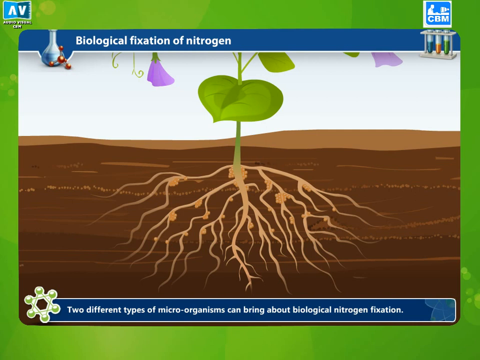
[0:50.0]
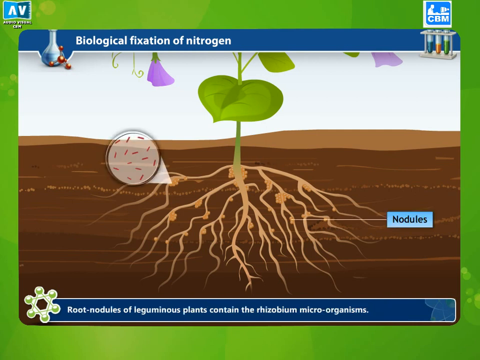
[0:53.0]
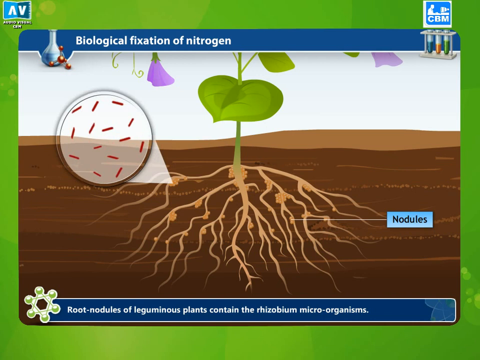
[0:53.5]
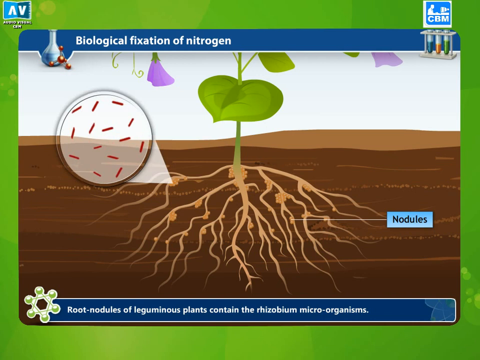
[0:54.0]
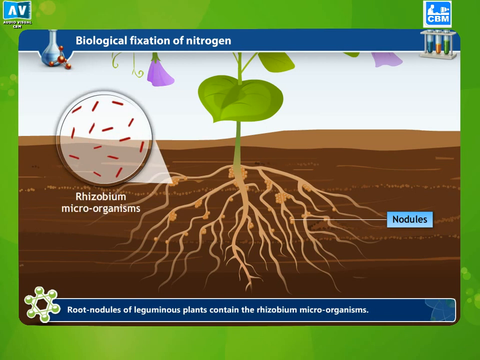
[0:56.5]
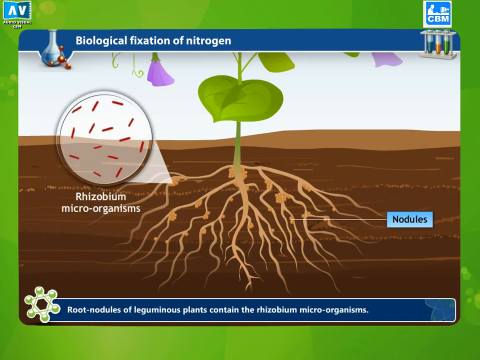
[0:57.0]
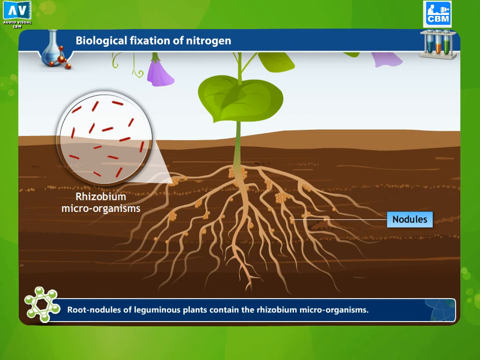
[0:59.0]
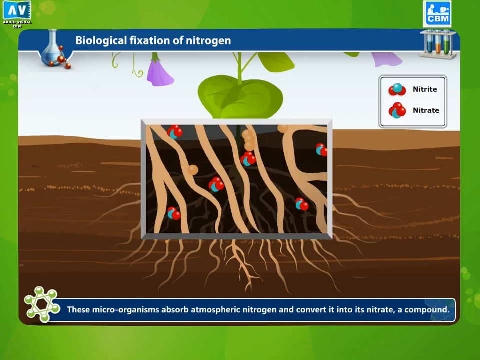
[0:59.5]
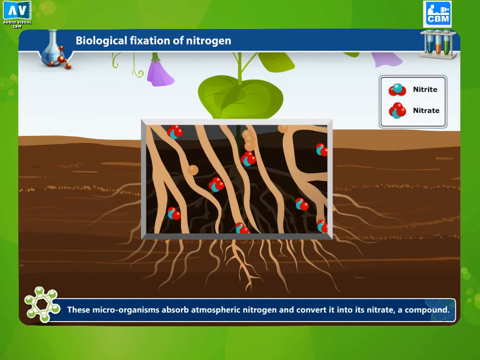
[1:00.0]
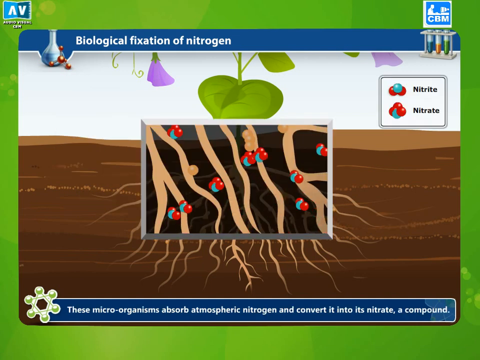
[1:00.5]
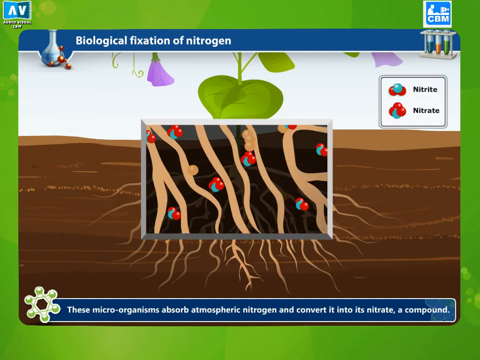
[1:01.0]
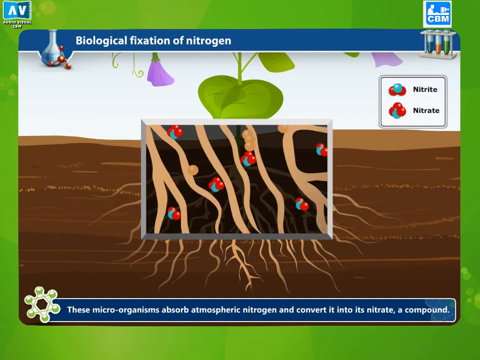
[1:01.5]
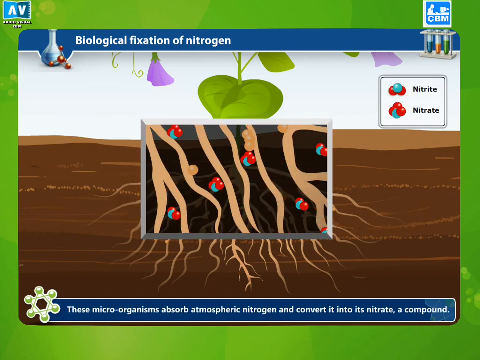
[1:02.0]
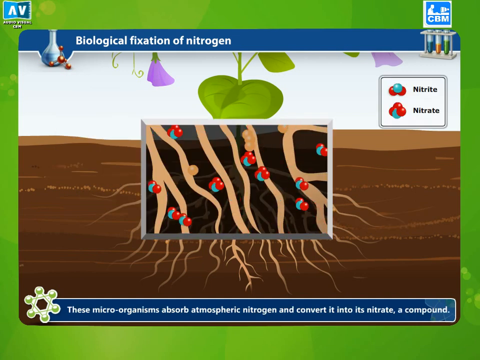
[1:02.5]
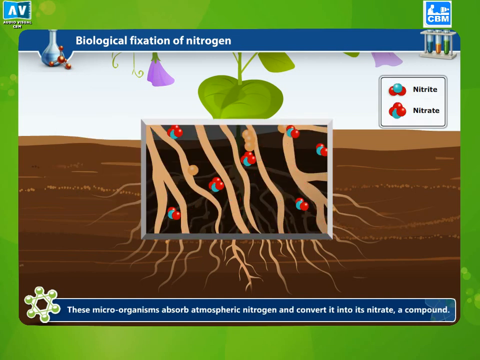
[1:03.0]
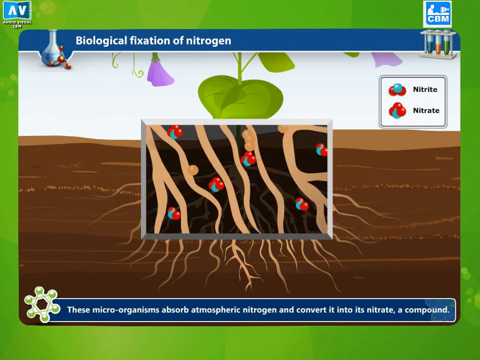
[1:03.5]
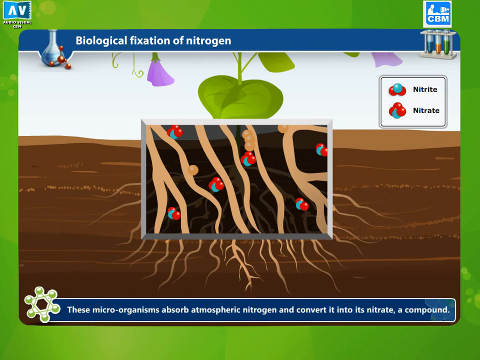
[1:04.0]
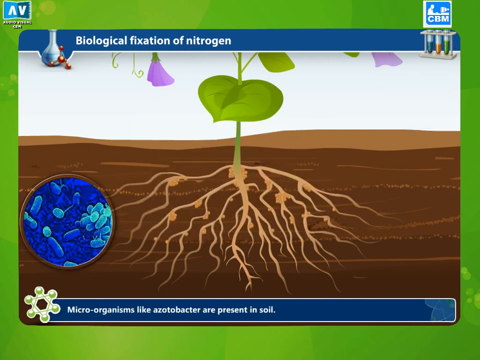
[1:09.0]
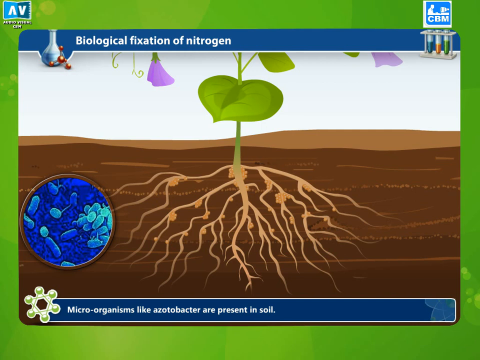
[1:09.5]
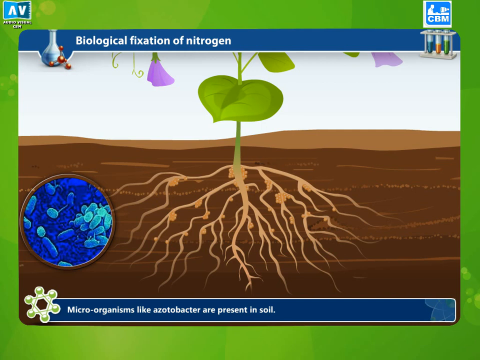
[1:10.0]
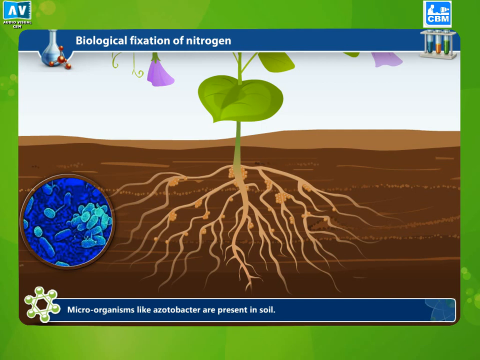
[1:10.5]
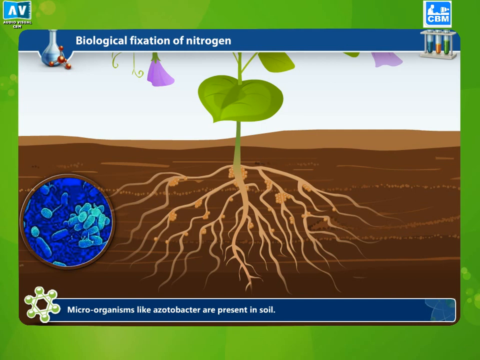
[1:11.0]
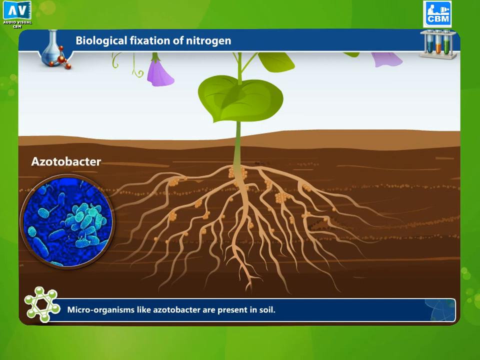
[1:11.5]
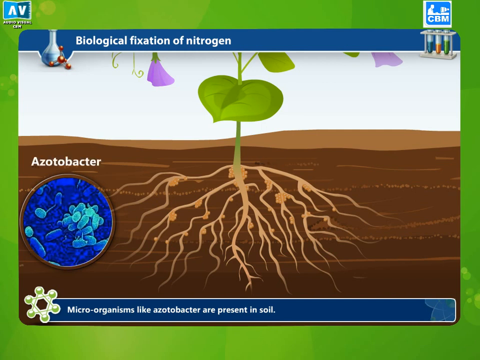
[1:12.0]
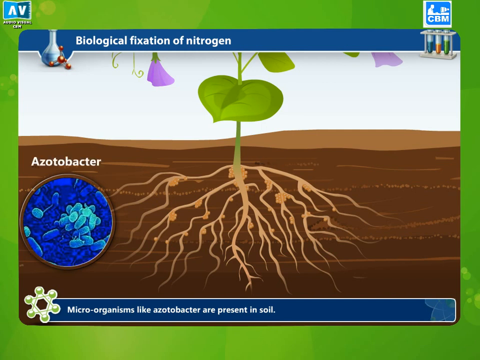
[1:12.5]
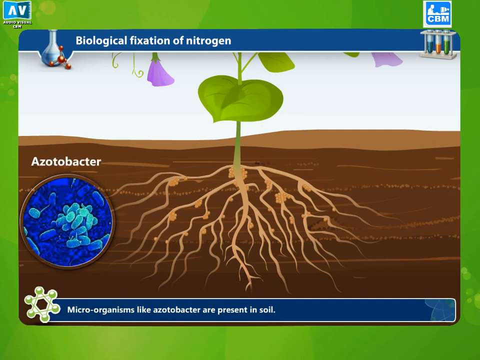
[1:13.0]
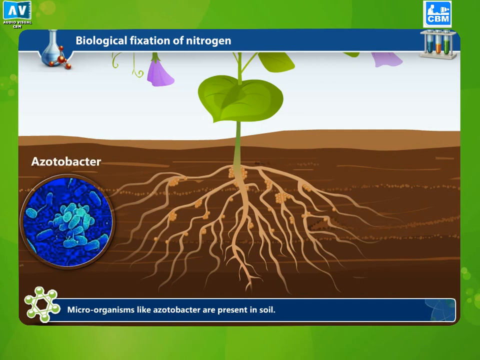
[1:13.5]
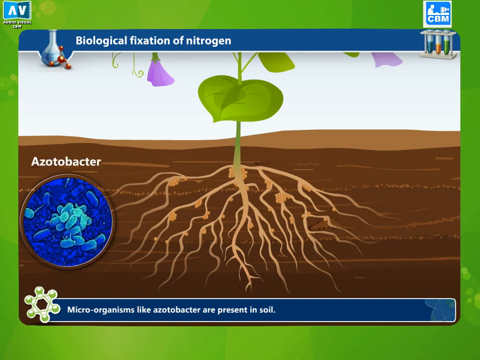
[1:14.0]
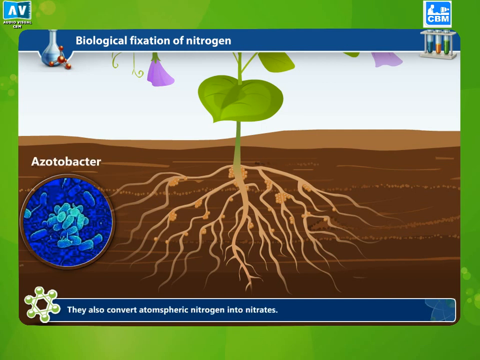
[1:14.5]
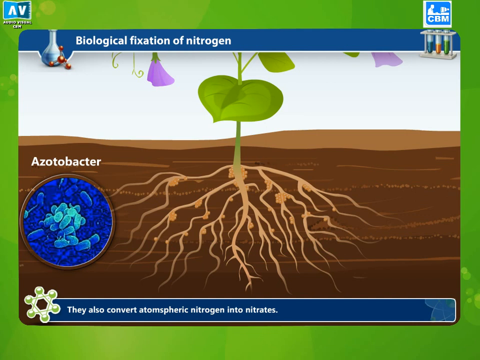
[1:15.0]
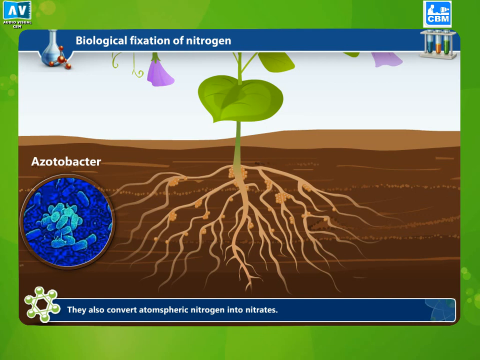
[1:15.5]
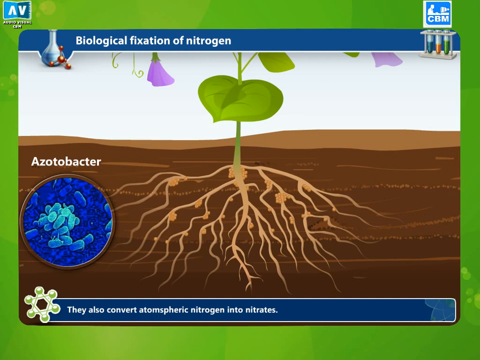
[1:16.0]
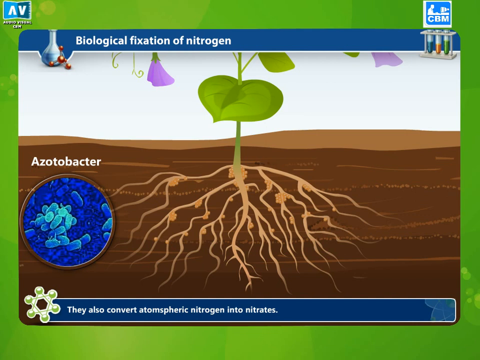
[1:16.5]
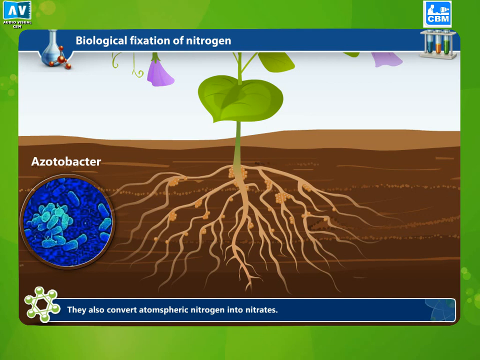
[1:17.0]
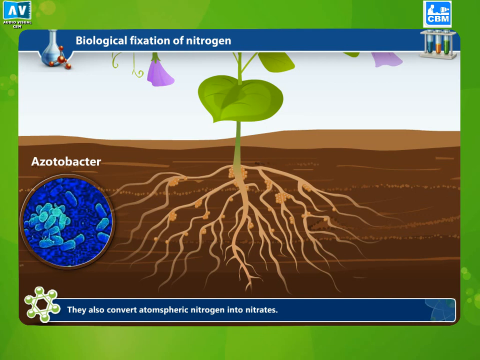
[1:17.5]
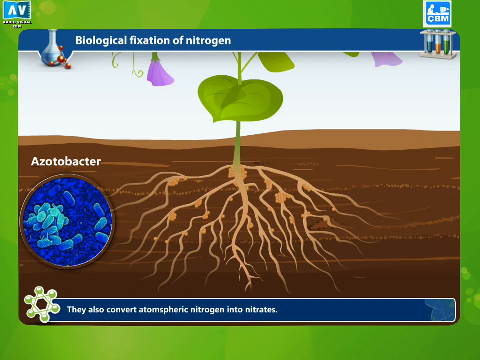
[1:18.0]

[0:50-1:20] A cartoon illustration is surrounded by a green border. At the top left are the letters "A-V," and at the top right are the letters "C-B-M." Below the A-V, white text reads "biological fixation of nitrogen." Underneath the C-B-M is a vial holder with dark forest green fluid in one vial, orange fluid in another, and regular green fluid in the farthest right vial. The center of the illustration shows brown dirt, apparently with roots in it. Part of the plant attached to the root is visible; it is green, with green leaves and purple flowers. At the bottom, below the root, a blue banner contains white text reading "two different types of microorganisms can bring about biological nitrogen fixation." To the left, black text on a blue banner reads "rhizobium," and text reads "nodules."